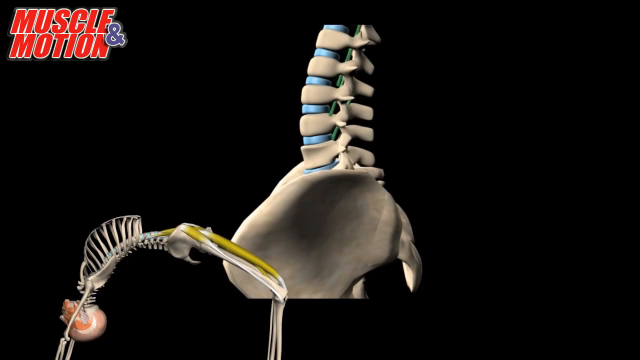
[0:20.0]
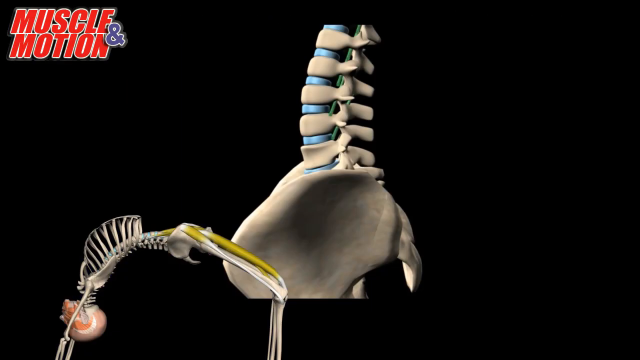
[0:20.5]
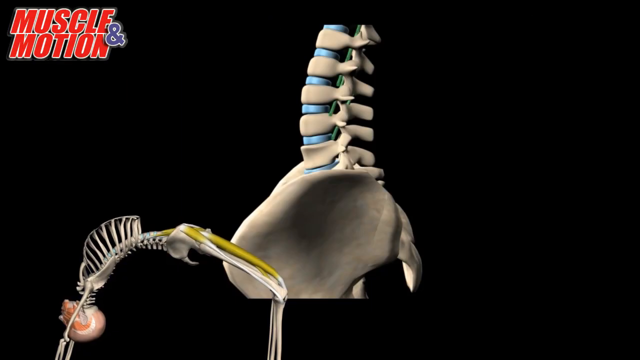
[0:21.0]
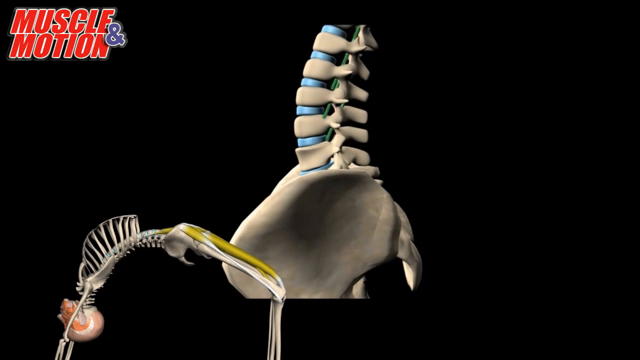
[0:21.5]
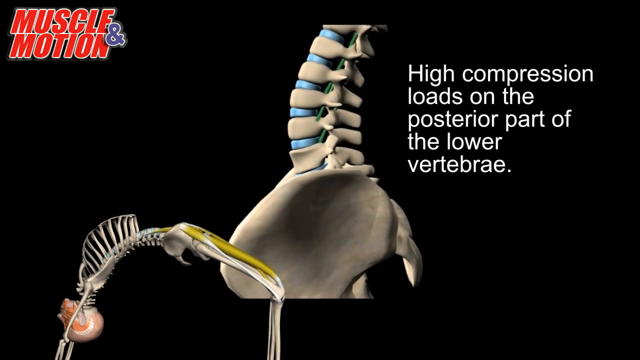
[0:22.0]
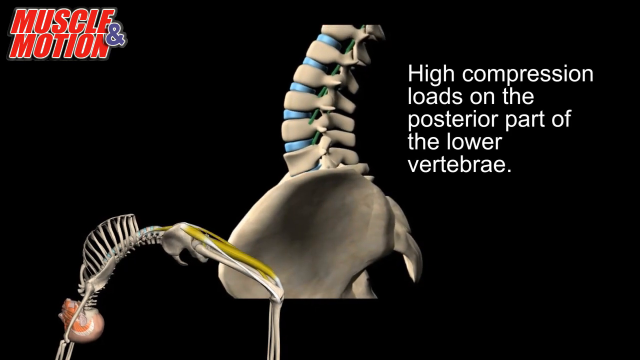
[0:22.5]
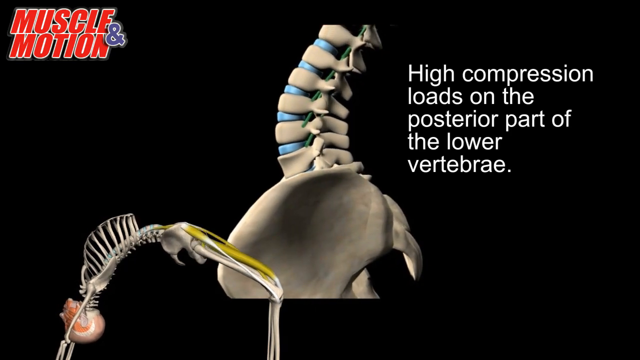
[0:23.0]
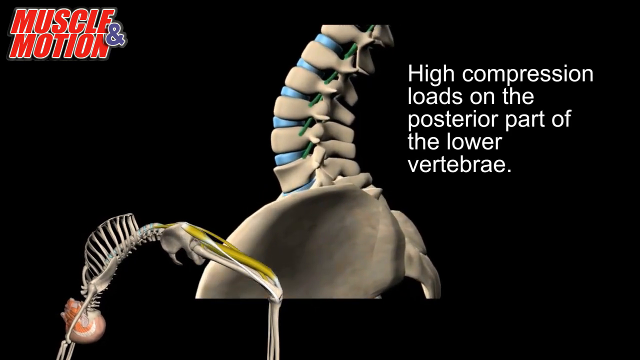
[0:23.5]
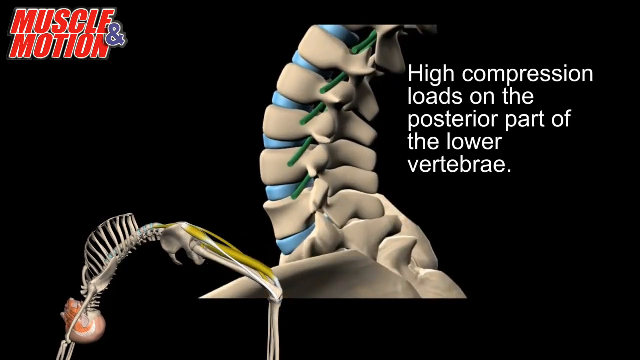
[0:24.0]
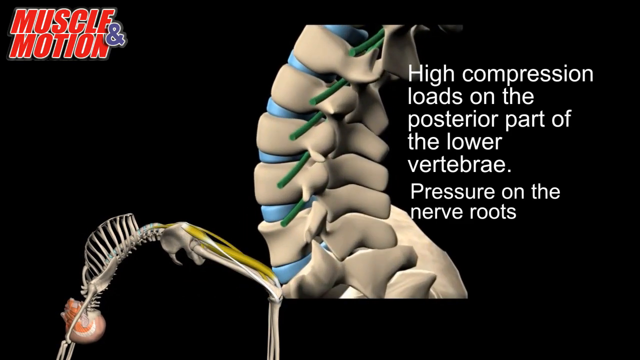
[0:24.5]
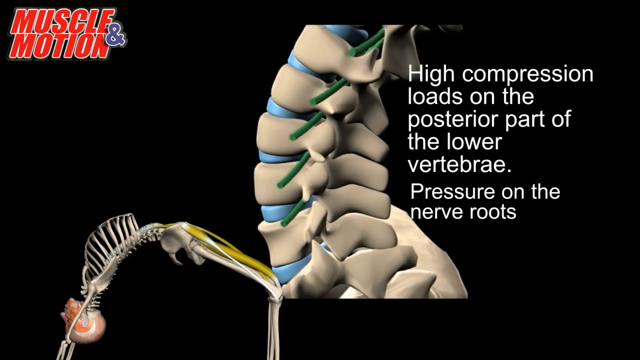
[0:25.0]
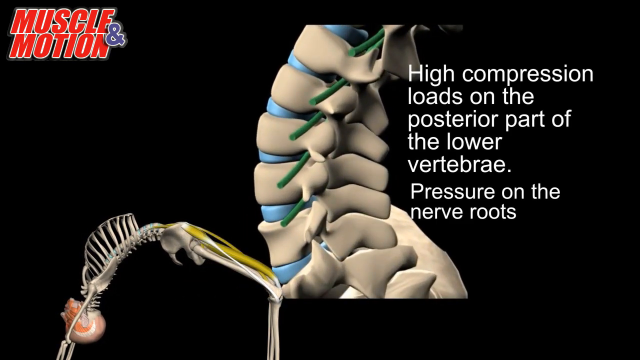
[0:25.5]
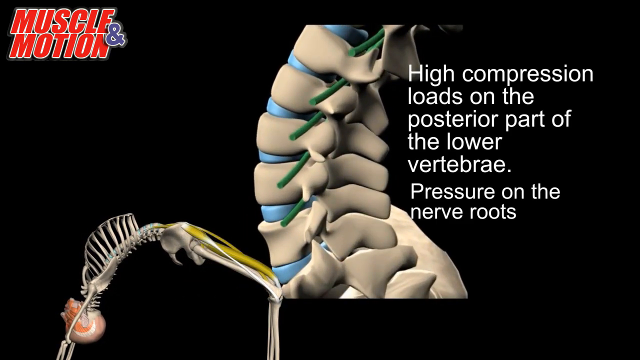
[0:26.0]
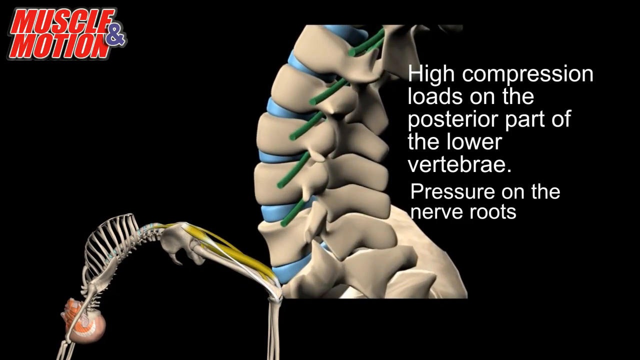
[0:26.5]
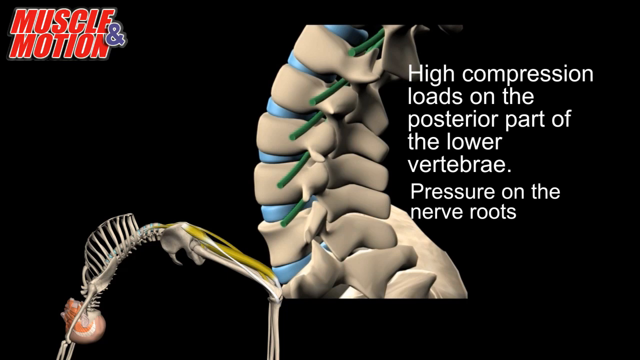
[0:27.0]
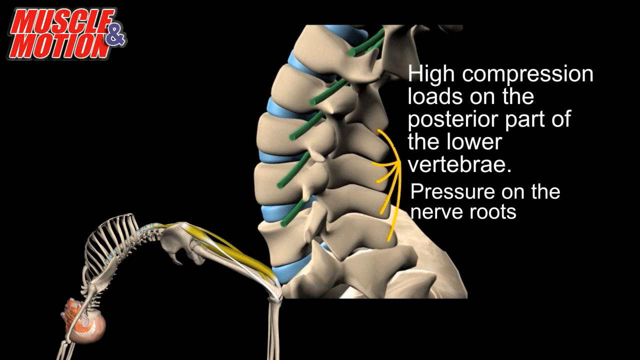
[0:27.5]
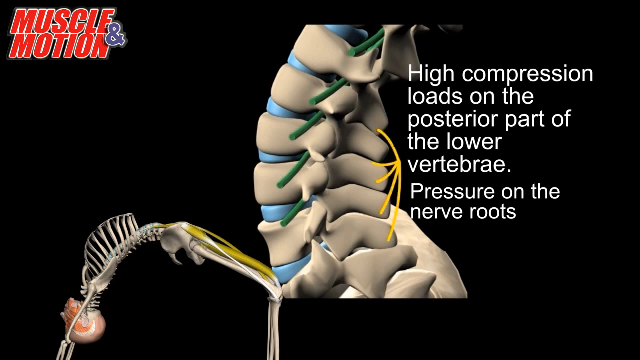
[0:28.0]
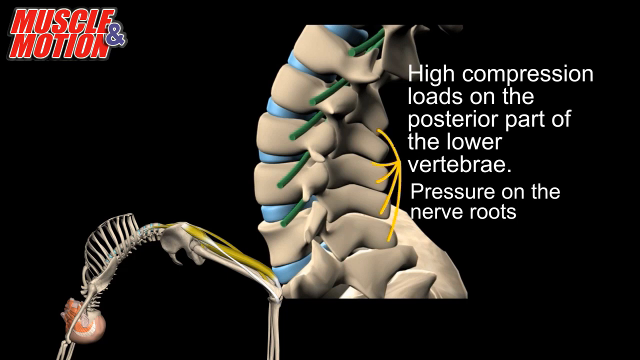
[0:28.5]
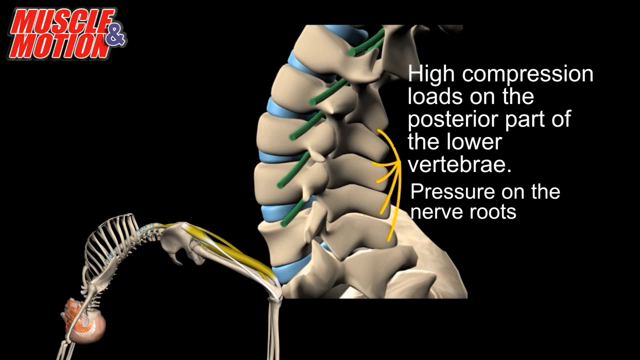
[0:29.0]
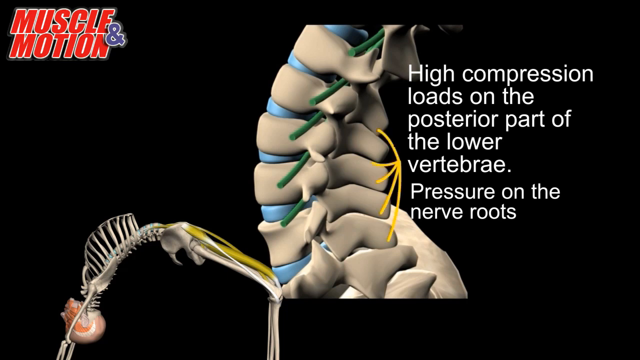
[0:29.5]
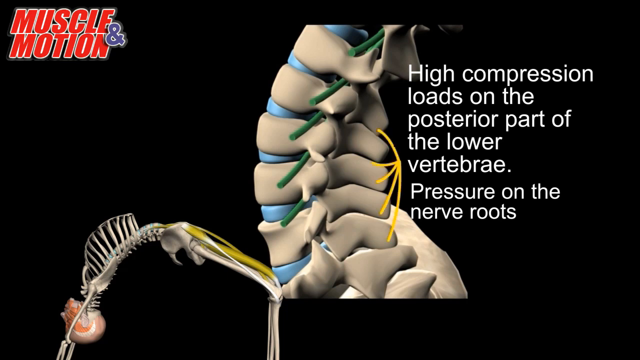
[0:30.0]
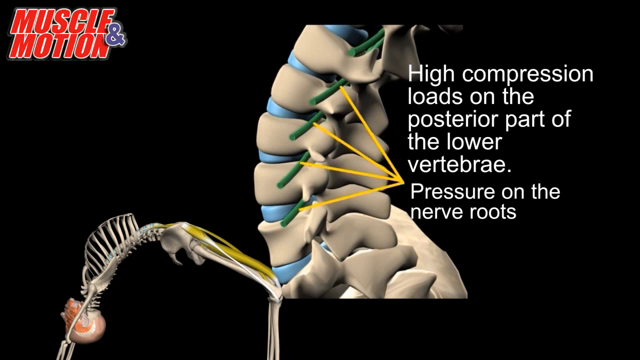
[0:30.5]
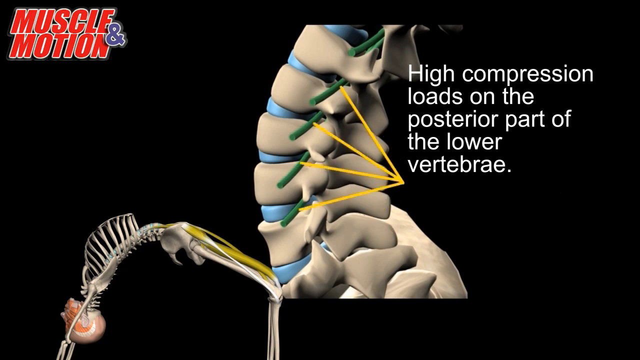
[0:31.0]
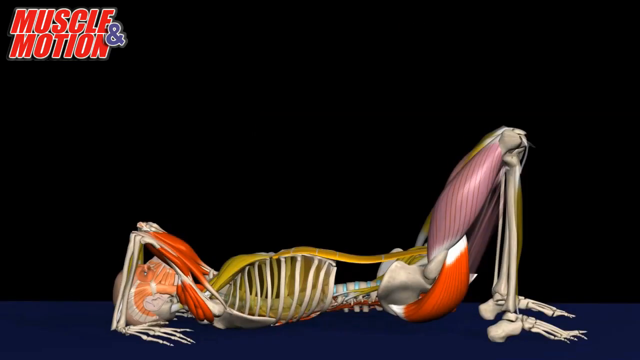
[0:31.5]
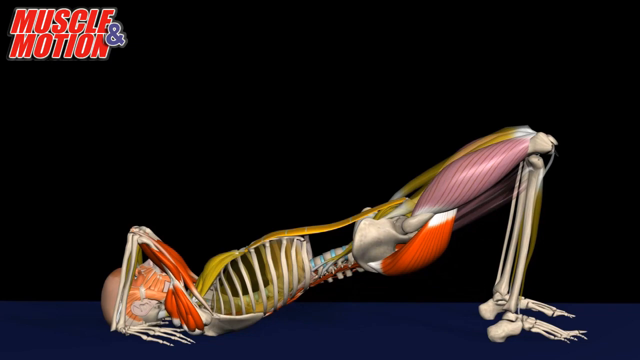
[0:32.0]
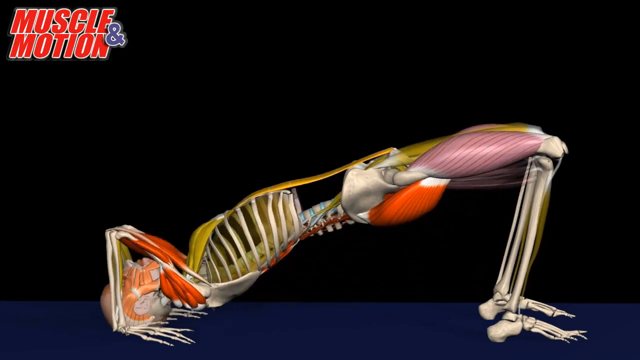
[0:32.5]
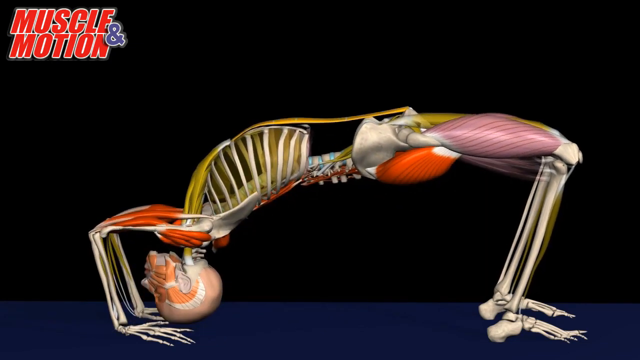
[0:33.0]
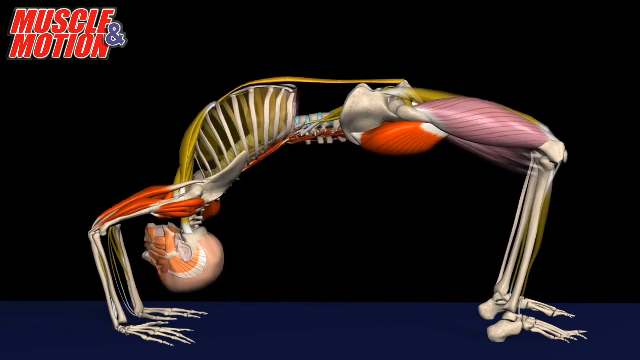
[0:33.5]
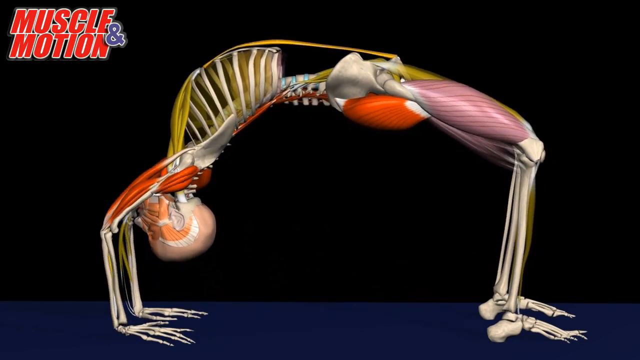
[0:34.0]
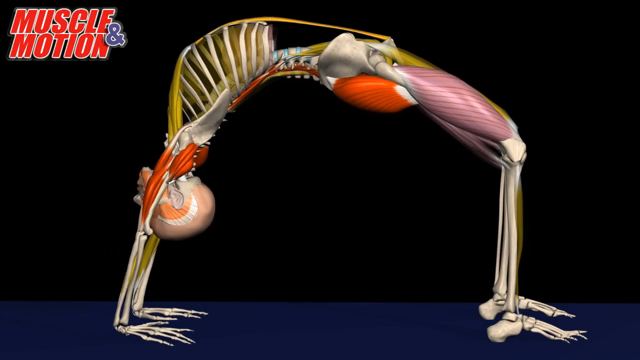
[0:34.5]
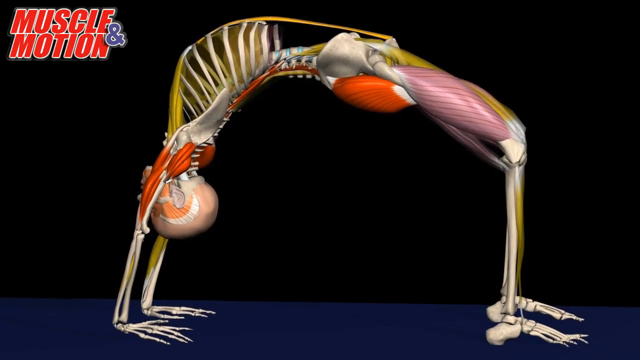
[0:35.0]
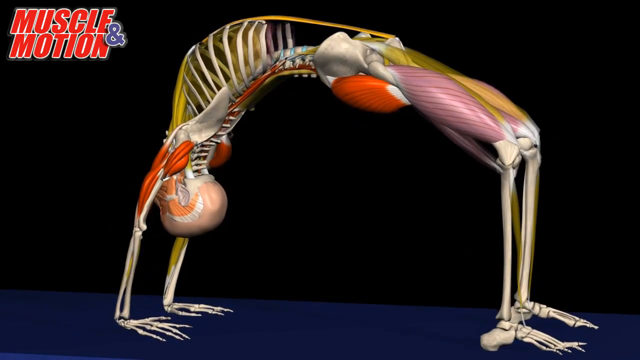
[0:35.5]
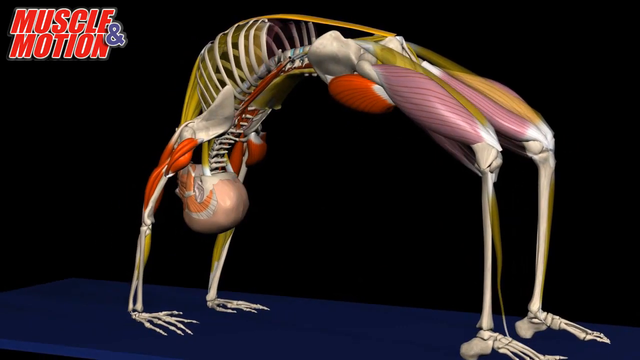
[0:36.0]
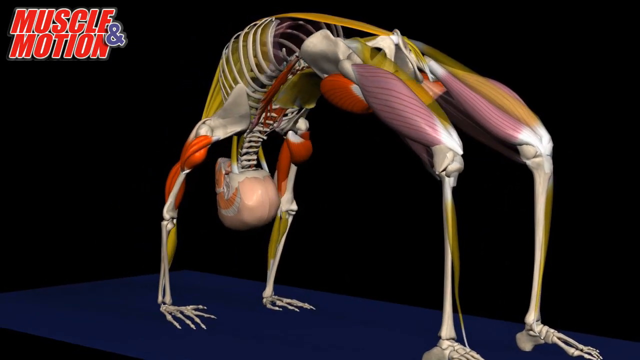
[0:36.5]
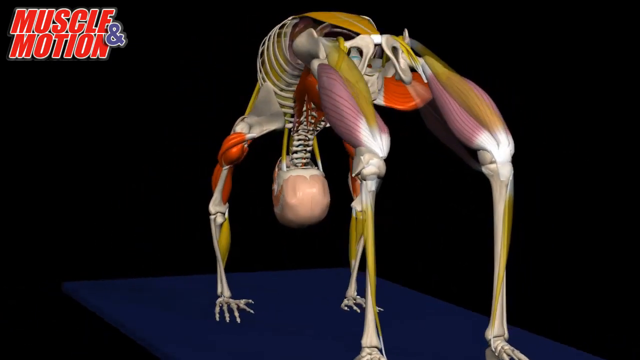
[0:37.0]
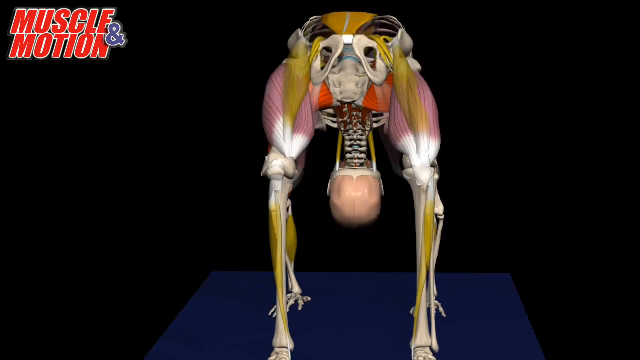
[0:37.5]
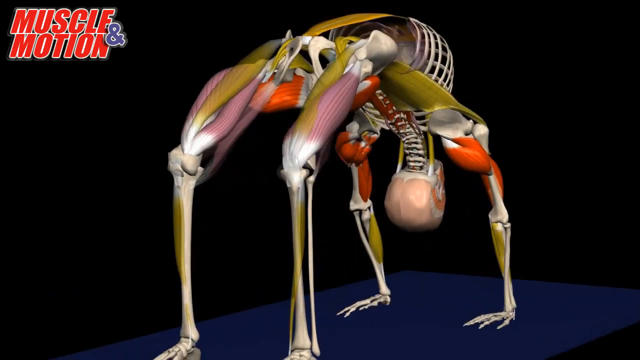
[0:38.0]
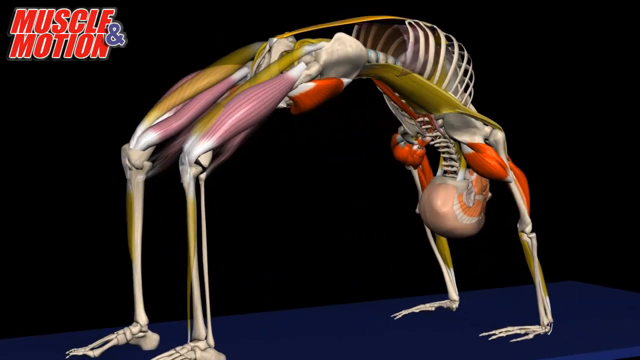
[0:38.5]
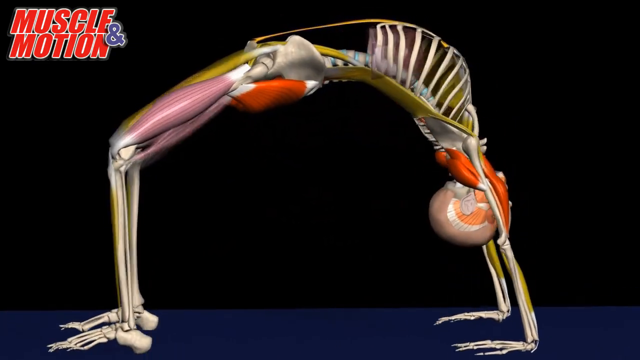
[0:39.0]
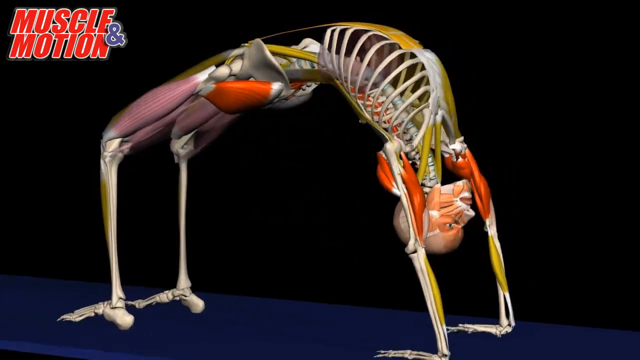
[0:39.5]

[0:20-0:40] Against a black background, the words "Muscle & Motion" appear in red in the upper left corner, with the "&" in blue. At the bottom left is the upside-down 3D skeleton thrusting its hips upwards. In the background is a 3D model of bones, which curve down and to the left as white text appears to the right reading "High compression loads on the posterior part of the lower vertebrae". The view zooms in on the bones in the background, and new text appears reading "Pressure on the nerve roots". Yellow lines appear, pointing to where there is high compression and pressure on the nerve roots. Next, a 3D model of a person made of bones and muscles, facing up while laying on the ground, pushes themselves up with their arms and legs, upside down, and thrusts their pelvis up into the air, seen from a side view. Once the position is achieved, the model rotates to the right in a 360-degree fashion.